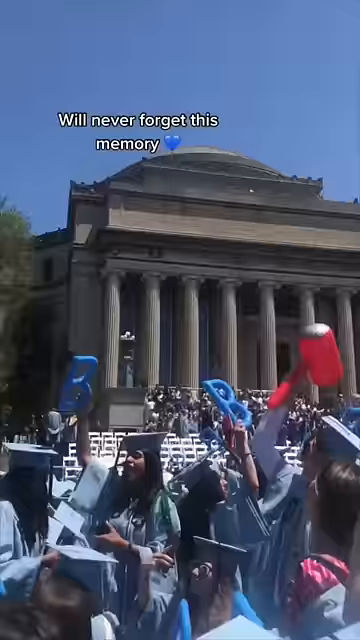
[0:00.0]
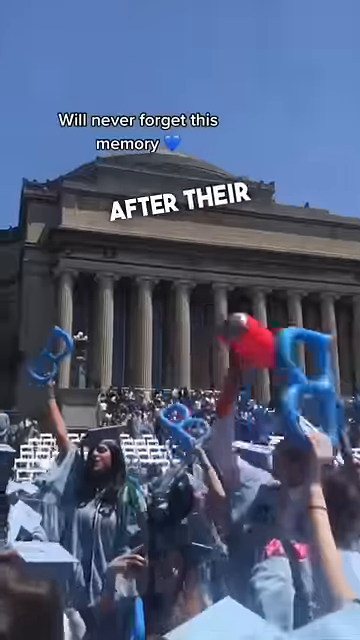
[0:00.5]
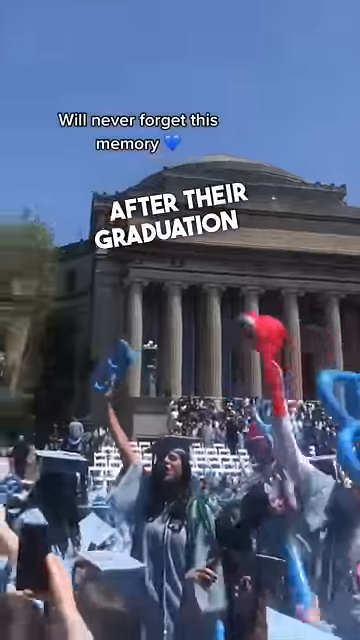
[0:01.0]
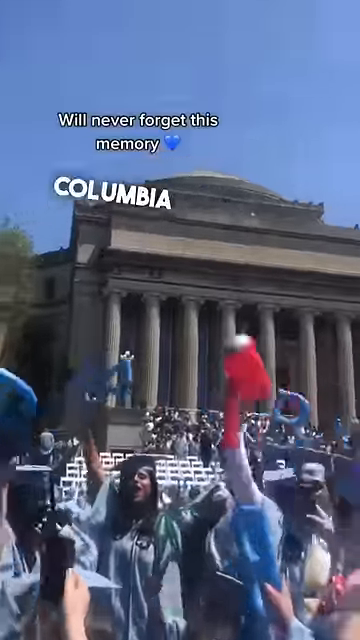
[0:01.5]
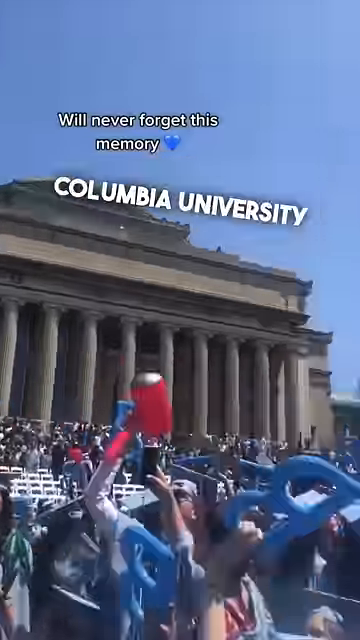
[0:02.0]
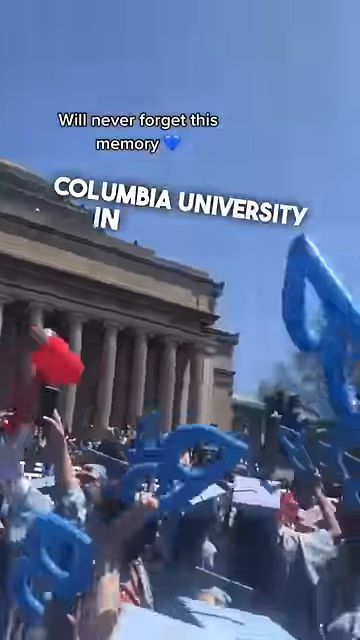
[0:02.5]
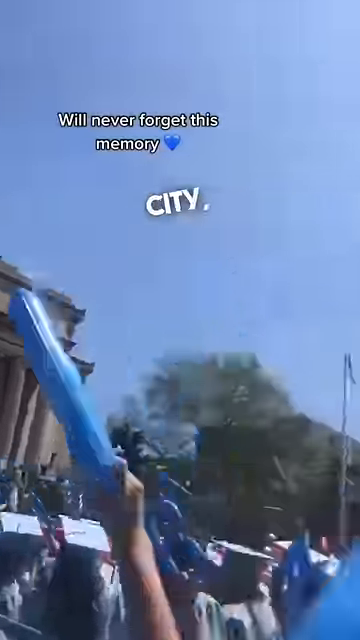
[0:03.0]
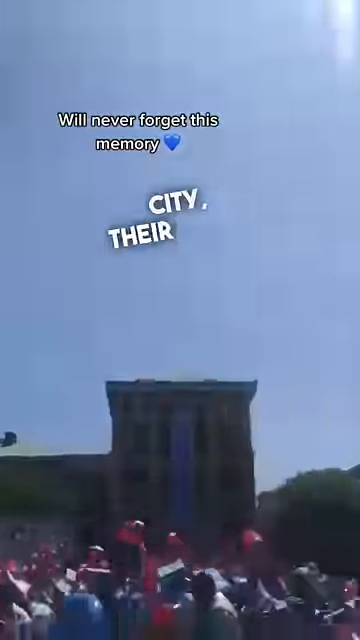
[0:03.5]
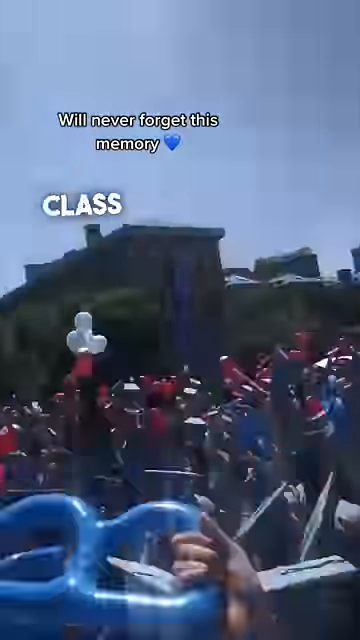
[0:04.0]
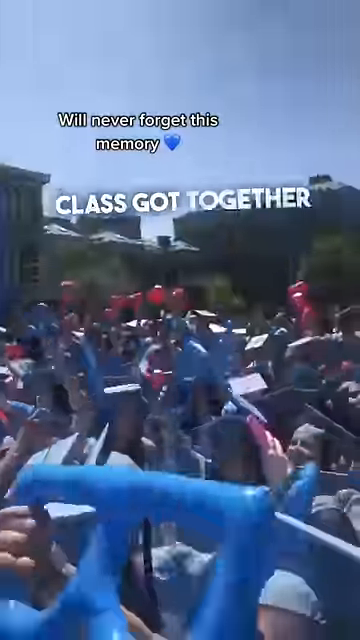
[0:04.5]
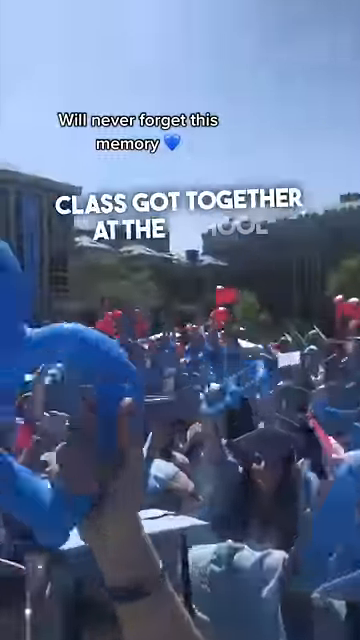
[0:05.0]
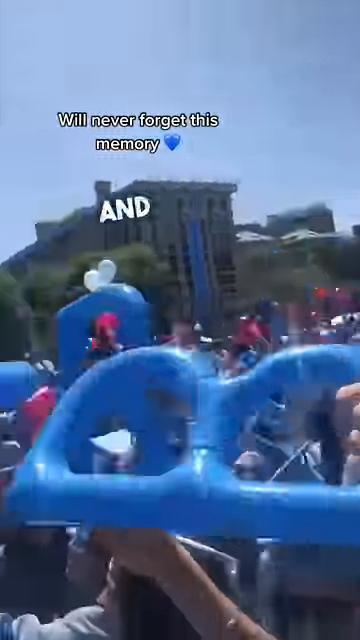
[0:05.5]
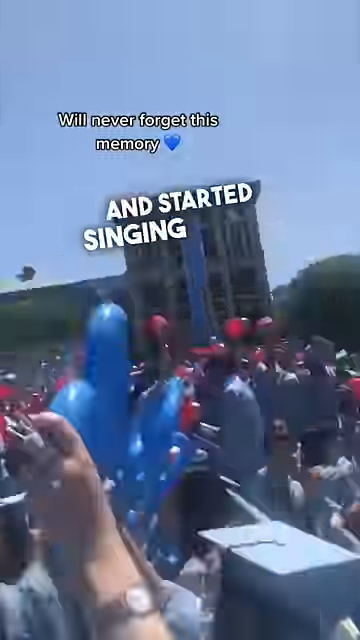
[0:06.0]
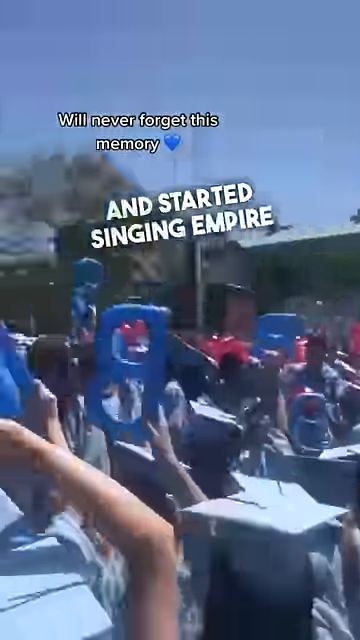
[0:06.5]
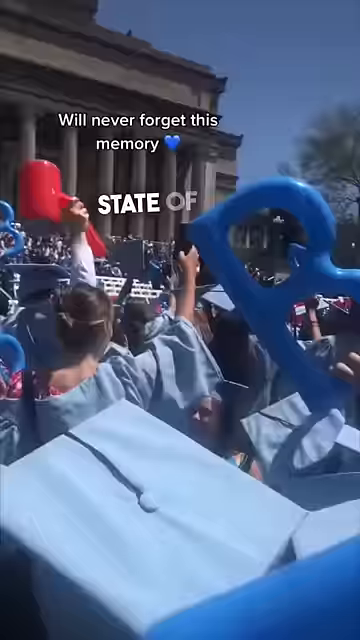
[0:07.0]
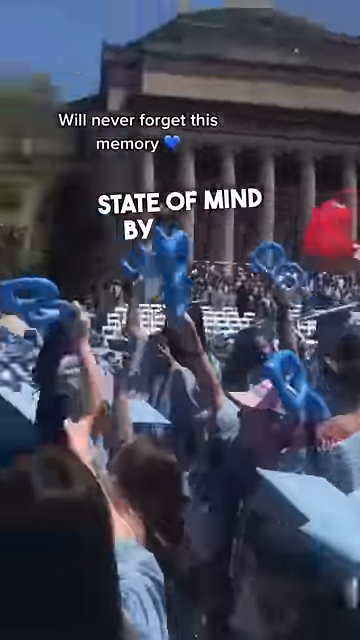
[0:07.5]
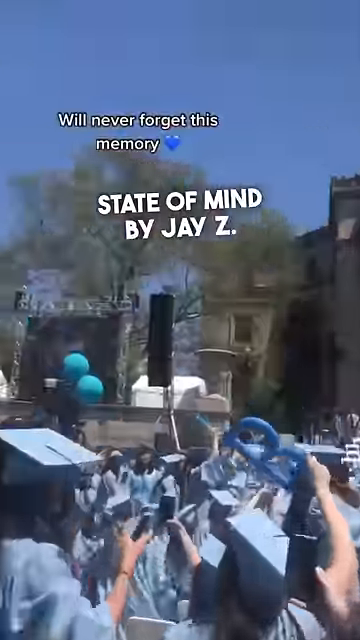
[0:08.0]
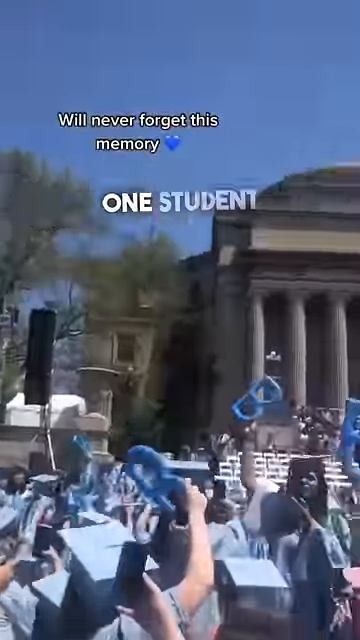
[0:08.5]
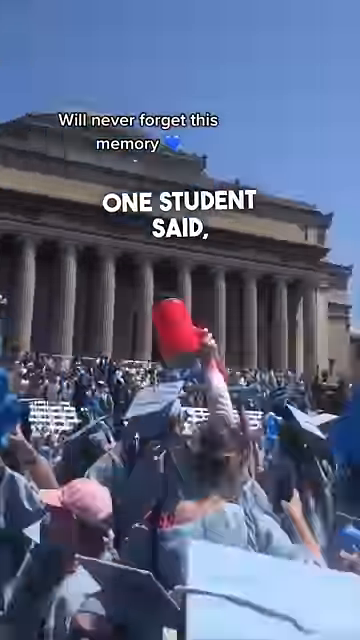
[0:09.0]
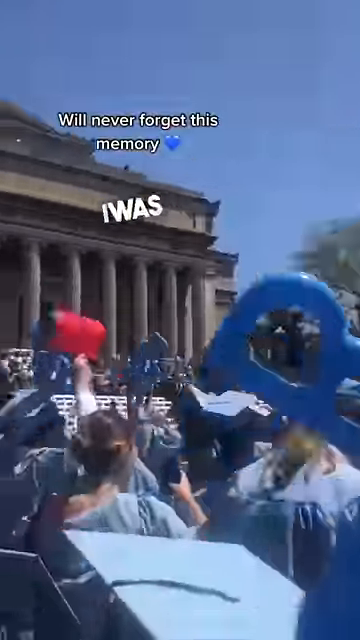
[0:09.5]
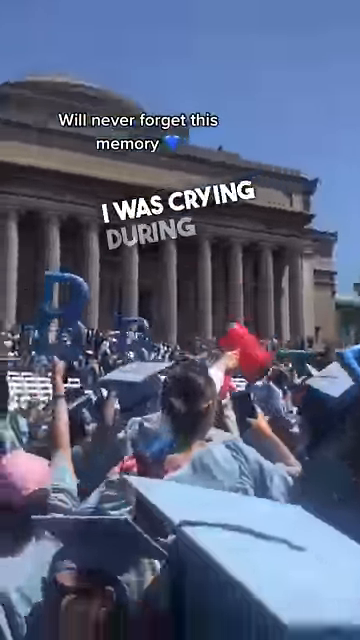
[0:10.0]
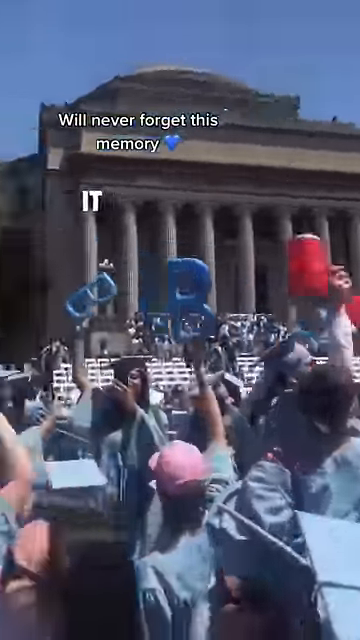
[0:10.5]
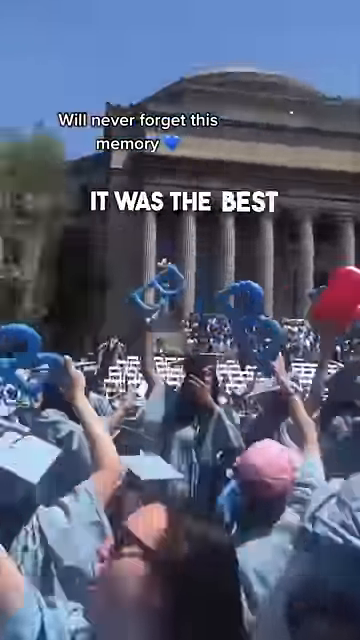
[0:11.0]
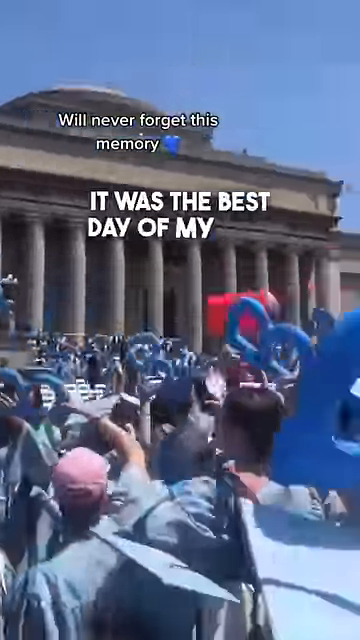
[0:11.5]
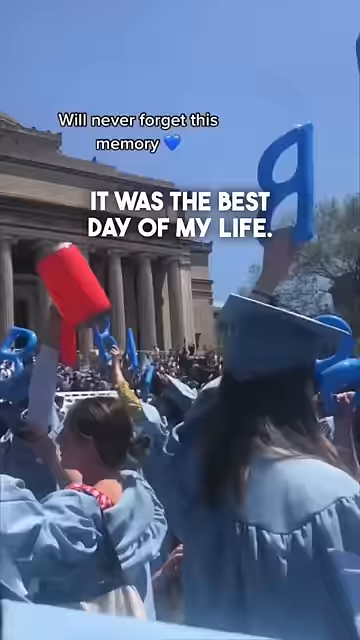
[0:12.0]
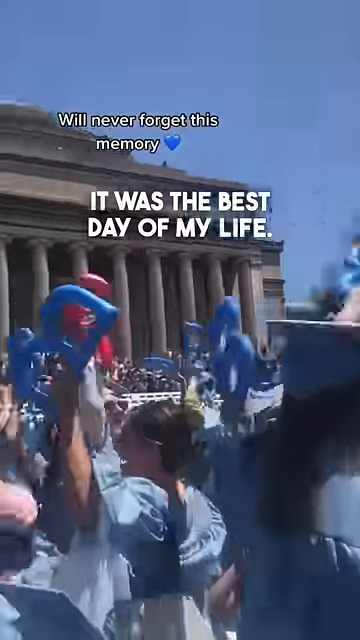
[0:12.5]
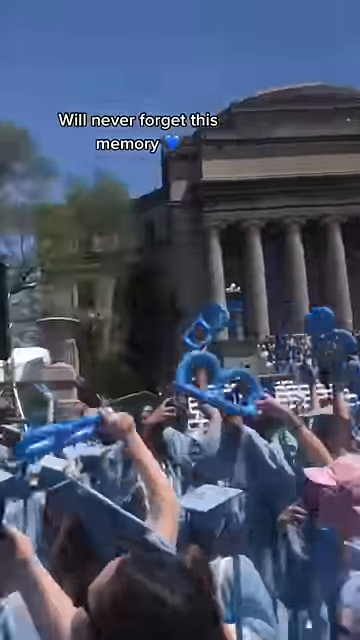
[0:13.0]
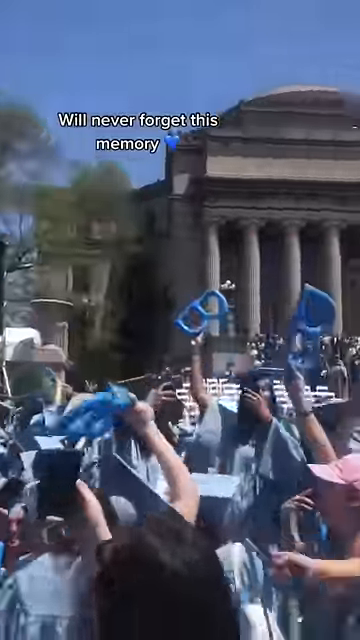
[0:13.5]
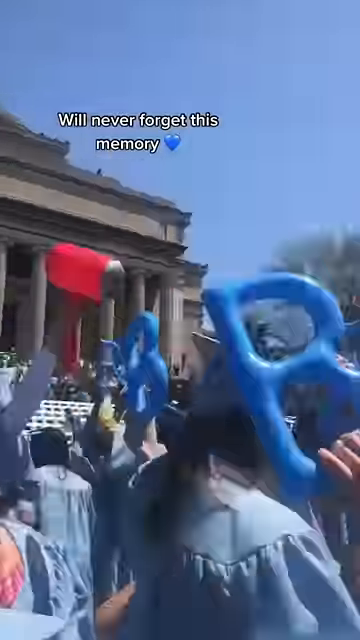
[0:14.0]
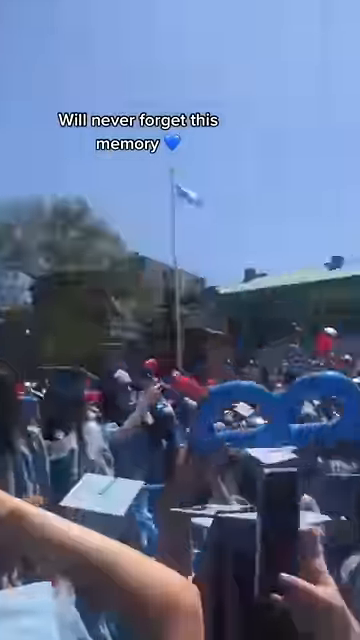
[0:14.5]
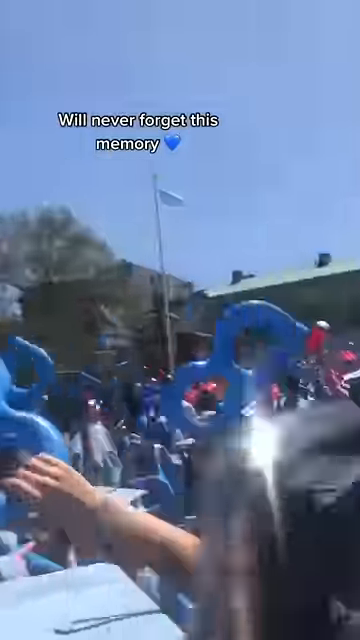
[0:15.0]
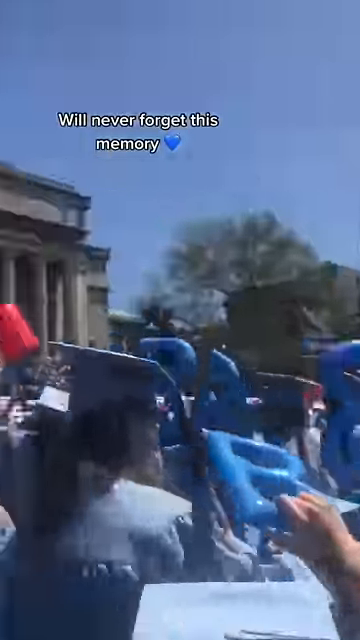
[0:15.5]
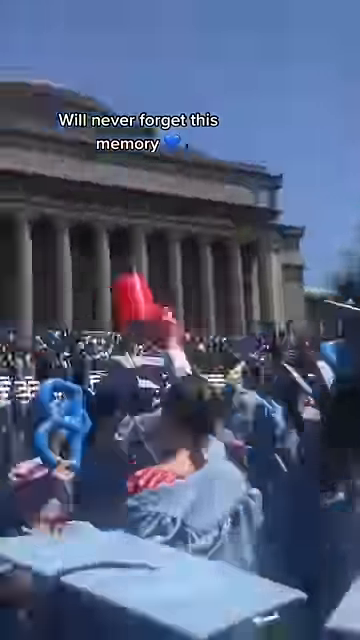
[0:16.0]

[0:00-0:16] A gathering that appears to be either a protest or a graduation takes place; it looks like a graduation, since people are wearing graduation gowns and caps. A bunch of people hold up what look to be plastic letters in their hands, such as a blue letter B, and some people hold some kind of red object. In the back there appears to be some sort of government building with lots of columns, and there is a blue sky in the back as well. Text on the screen reads "we'll never forget this memory" with a blue heart, and then the text changes to "after their graduation at Columbia University." The camera pans over and shows many more students, all holding up blue letter B's and kind of waving them around, as if doing some kind of chant or maybe singing a song. The camera moves back left and right, and the on-screen text changes to "it was the best day of my life." The camera moves around some more, showing more of the students and some of the buildings in the back. The students, in their graduation gowns and caps, are enjoying themselves, proud of themselves, and waving the letter B's in solidarity.